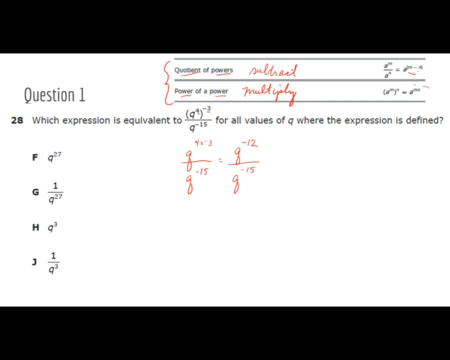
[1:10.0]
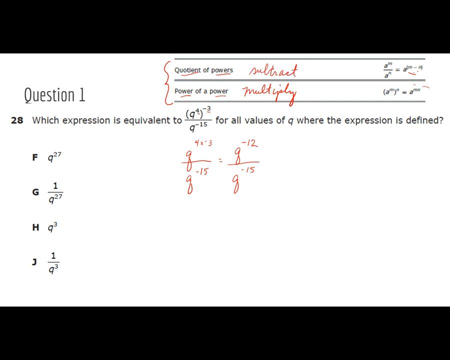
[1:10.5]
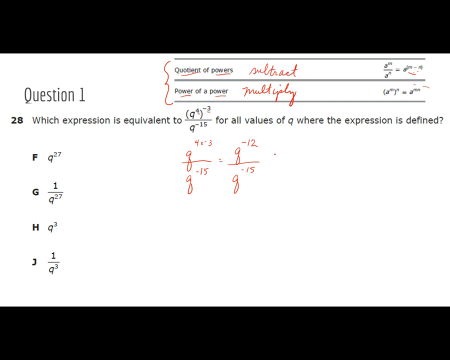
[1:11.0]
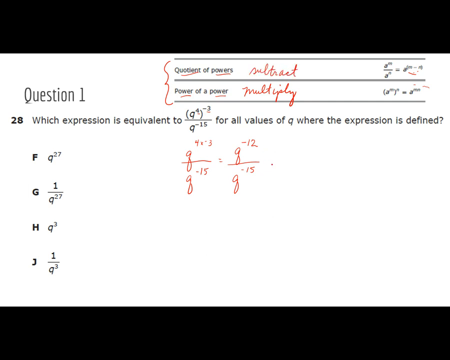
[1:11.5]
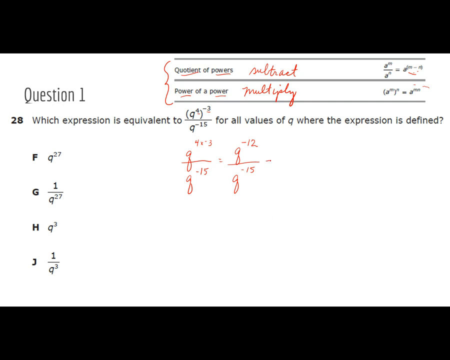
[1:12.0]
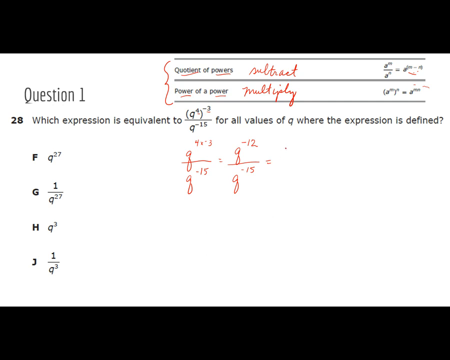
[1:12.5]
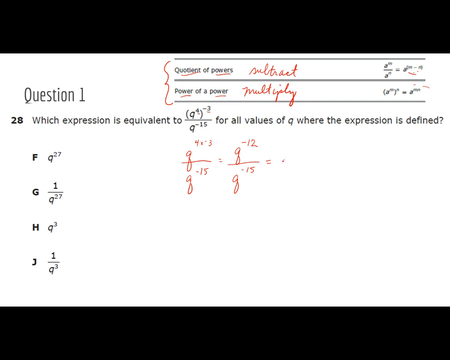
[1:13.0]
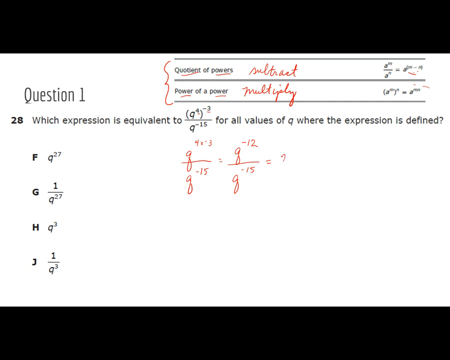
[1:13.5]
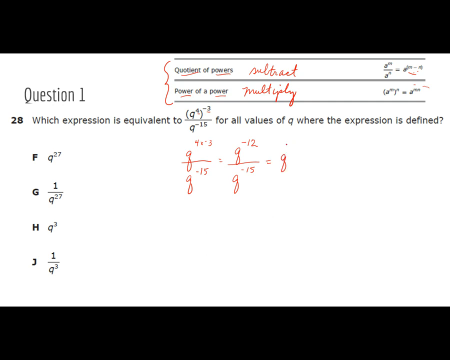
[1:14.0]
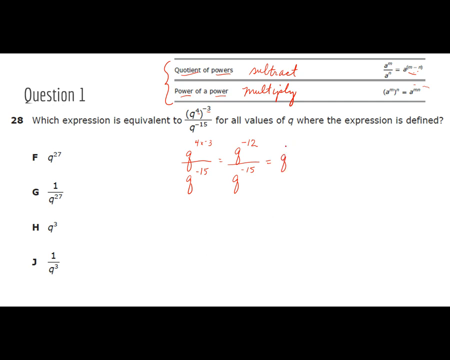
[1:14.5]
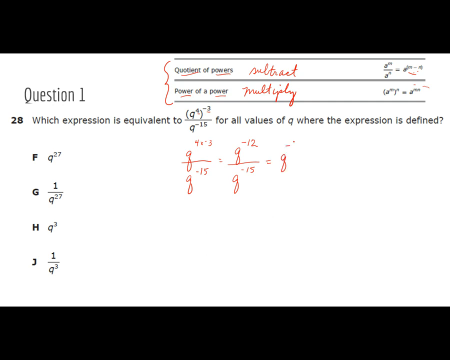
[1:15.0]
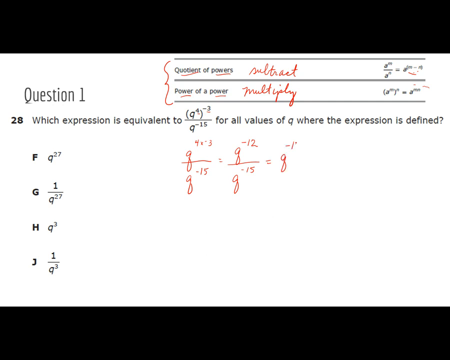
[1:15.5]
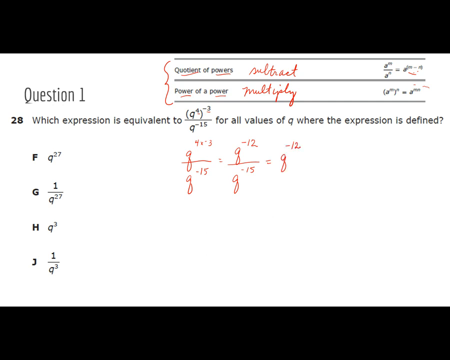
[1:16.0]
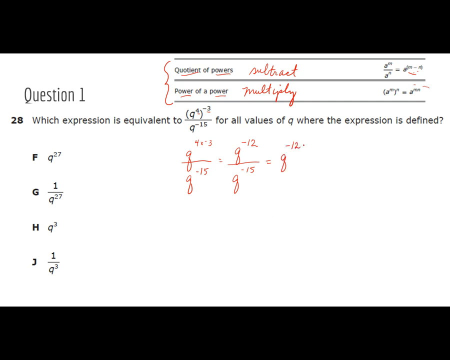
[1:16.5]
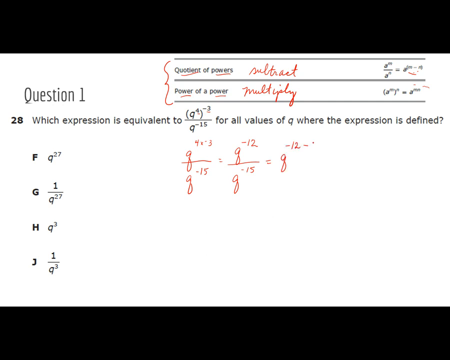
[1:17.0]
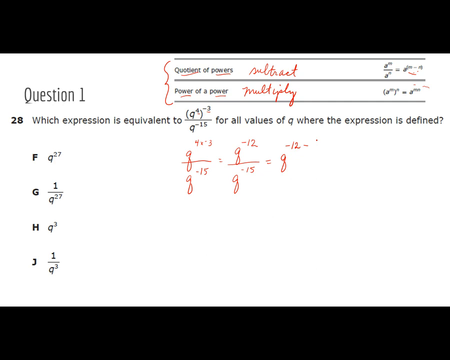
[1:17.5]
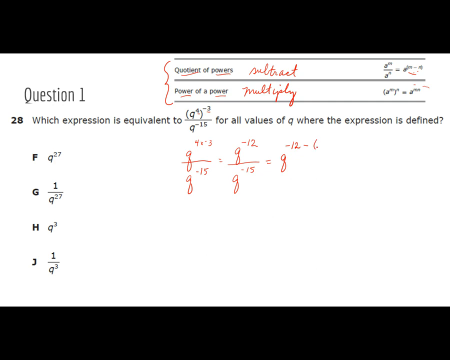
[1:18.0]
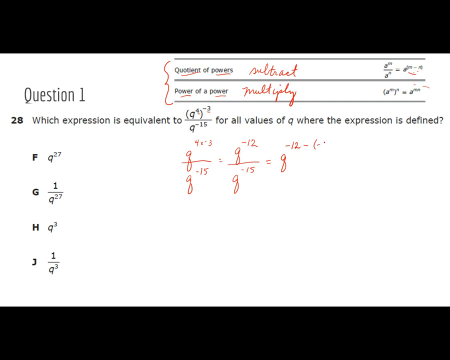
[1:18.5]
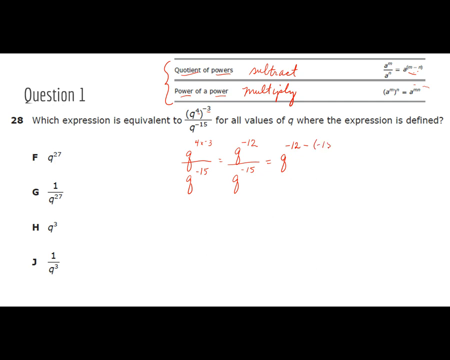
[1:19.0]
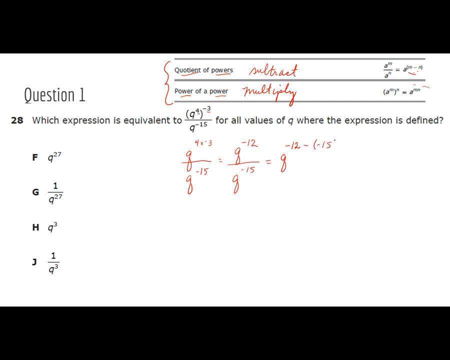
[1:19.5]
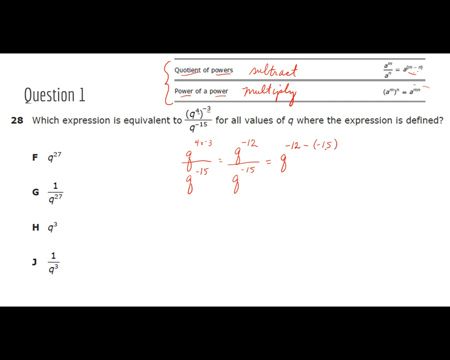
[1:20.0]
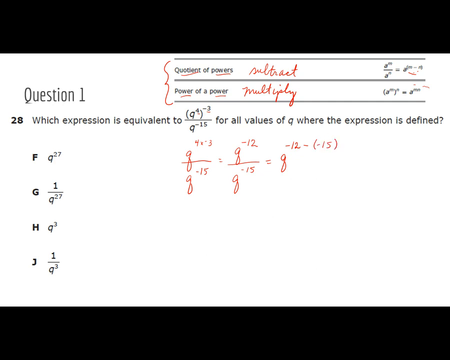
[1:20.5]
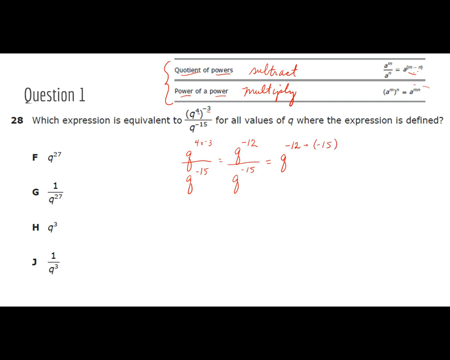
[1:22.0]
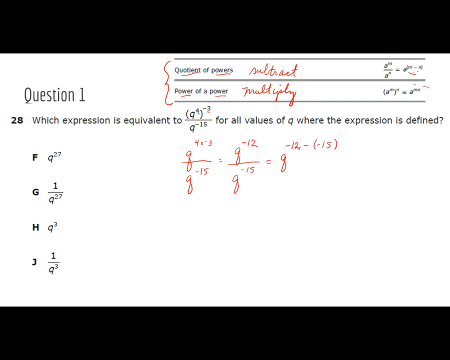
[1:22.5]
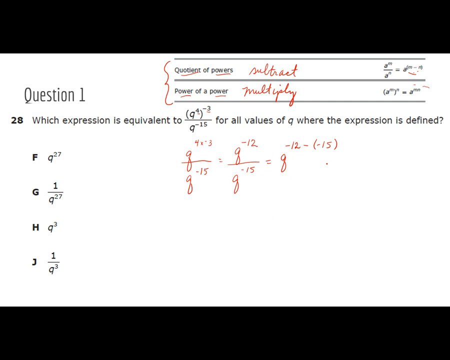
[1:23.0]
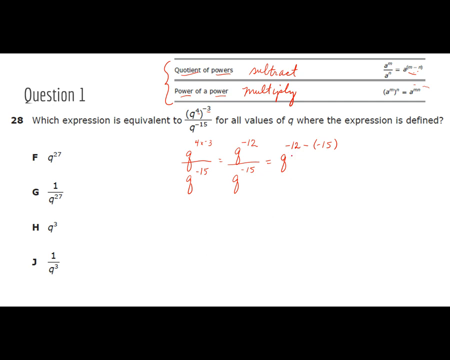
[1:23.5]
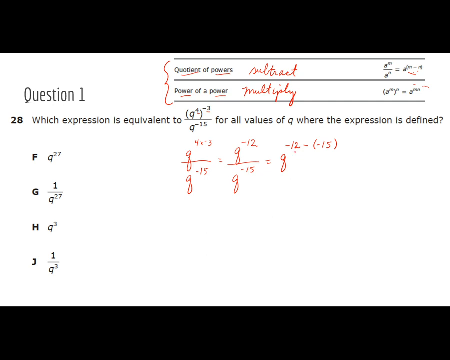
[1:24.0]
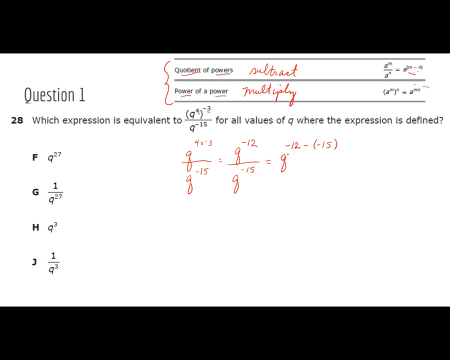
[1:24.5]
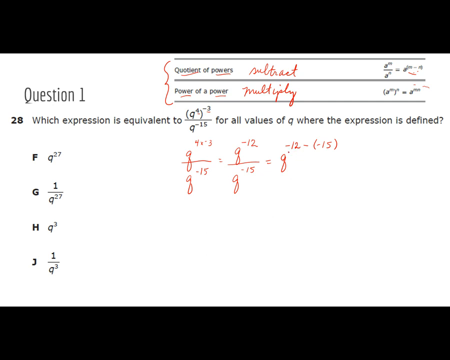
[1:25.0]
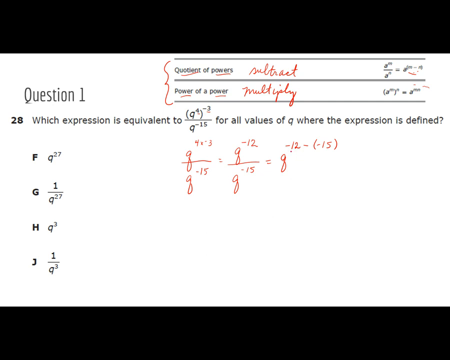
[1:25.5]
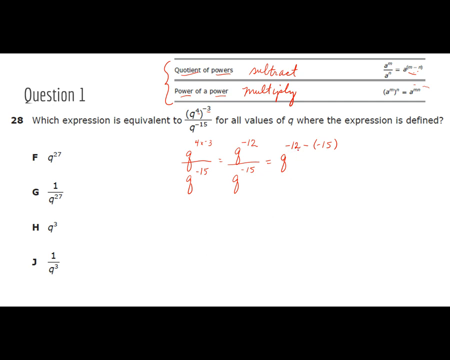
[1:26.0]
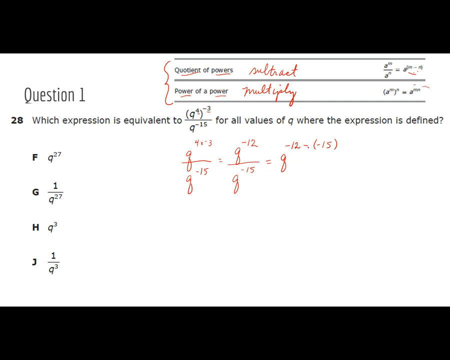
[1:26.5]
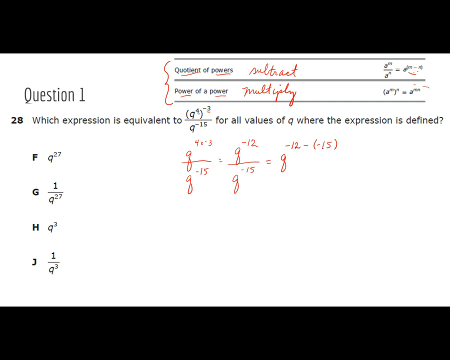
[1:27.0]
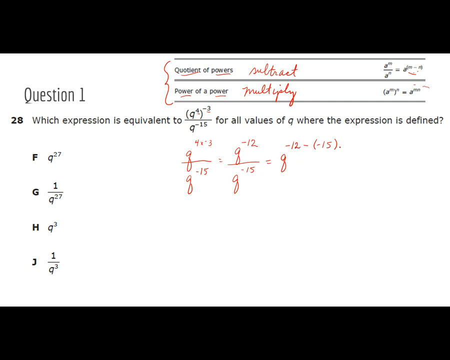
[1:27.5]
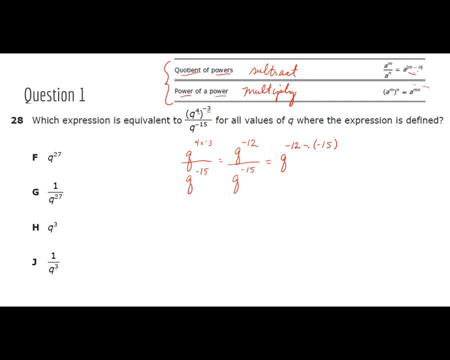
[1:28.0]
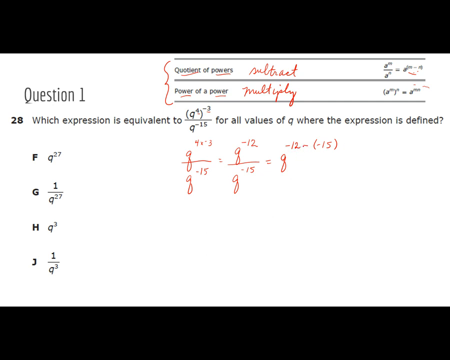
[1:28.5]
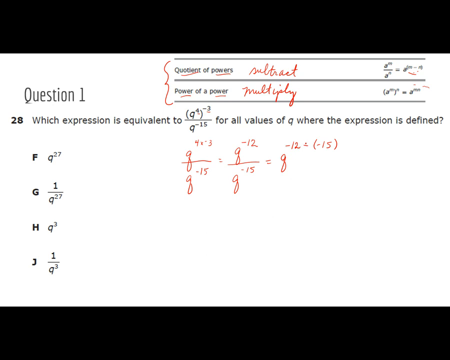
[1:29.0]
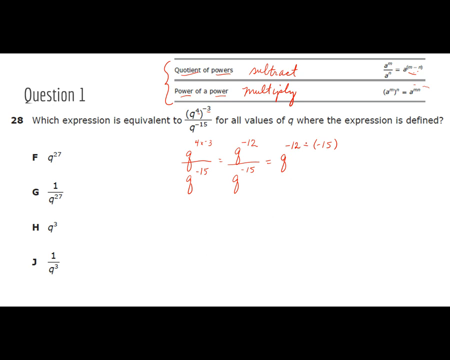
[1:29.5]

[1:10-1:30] The cursor goes back to q to the power of minus 12 over q to the power of minus 15, writes an equal sign, and writes q to the power of minus 12 minus (minus 15). The cursor then moves around the power, apparently as the presenter talks about the numbers written.